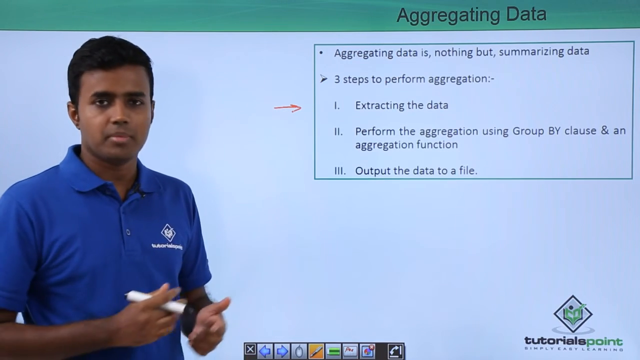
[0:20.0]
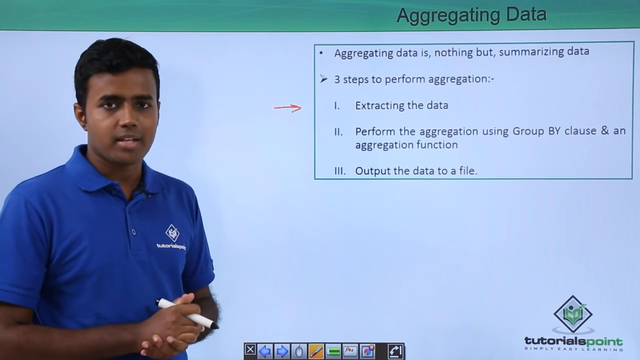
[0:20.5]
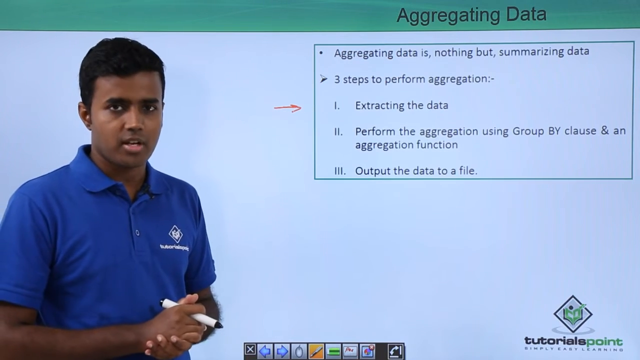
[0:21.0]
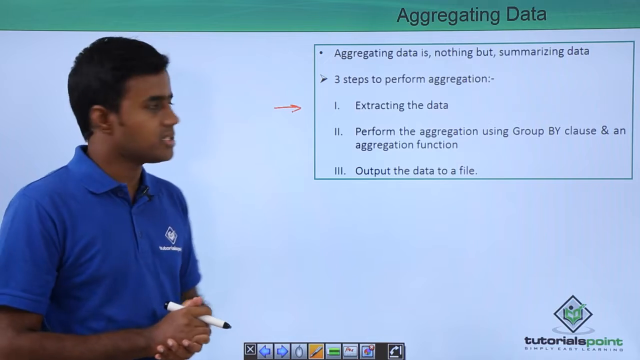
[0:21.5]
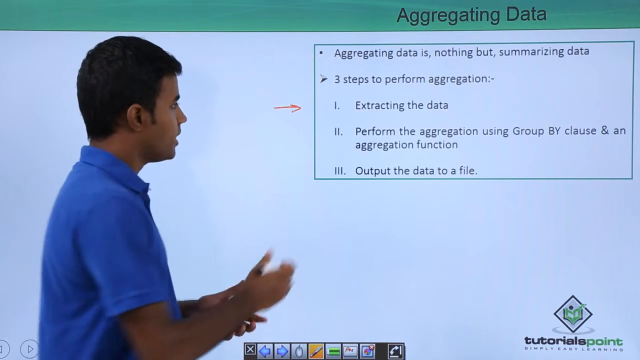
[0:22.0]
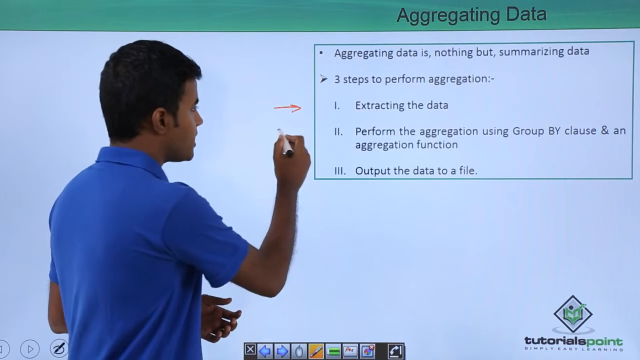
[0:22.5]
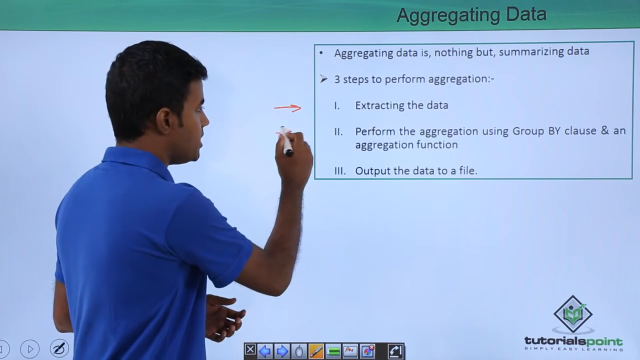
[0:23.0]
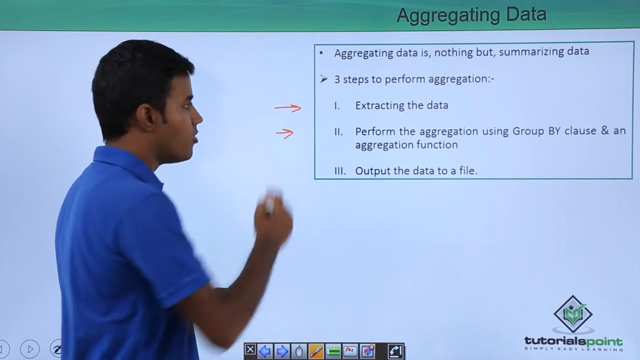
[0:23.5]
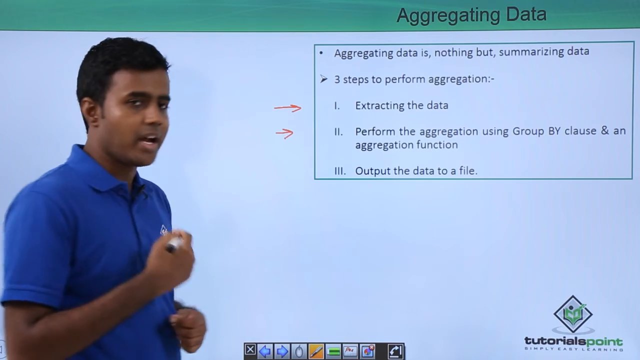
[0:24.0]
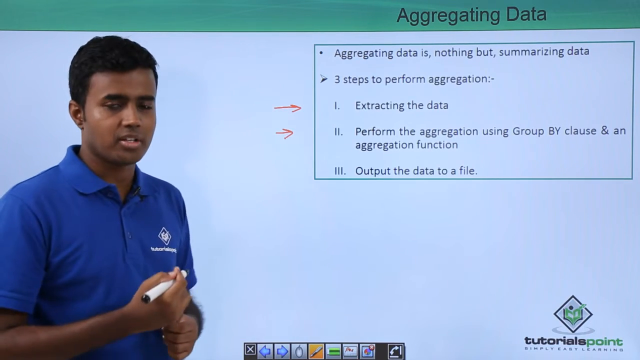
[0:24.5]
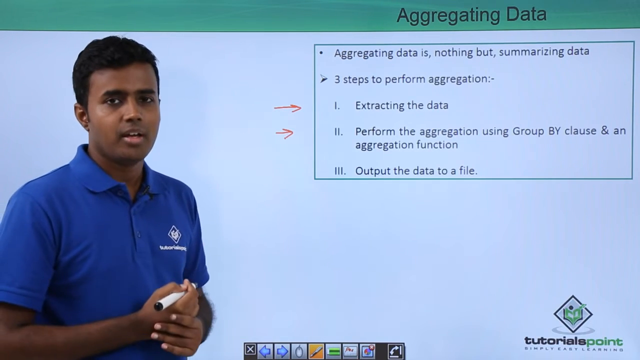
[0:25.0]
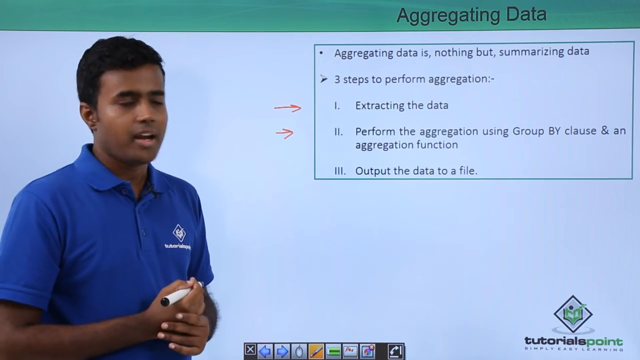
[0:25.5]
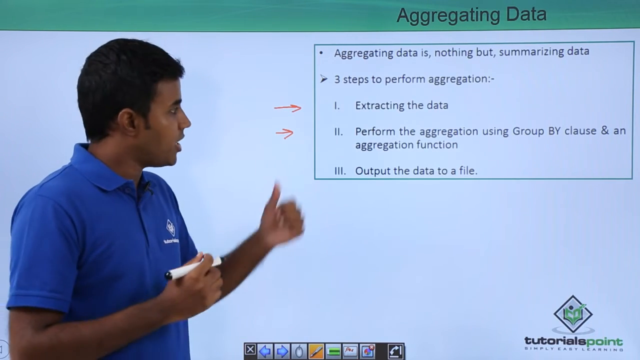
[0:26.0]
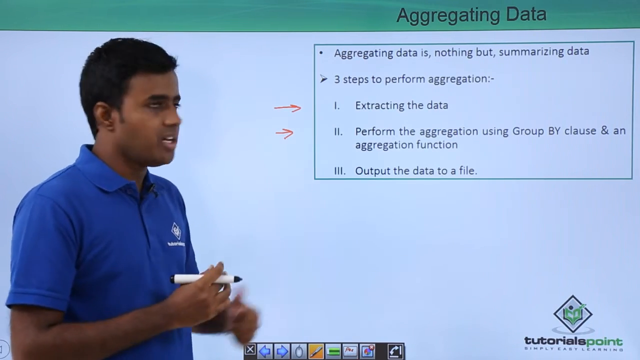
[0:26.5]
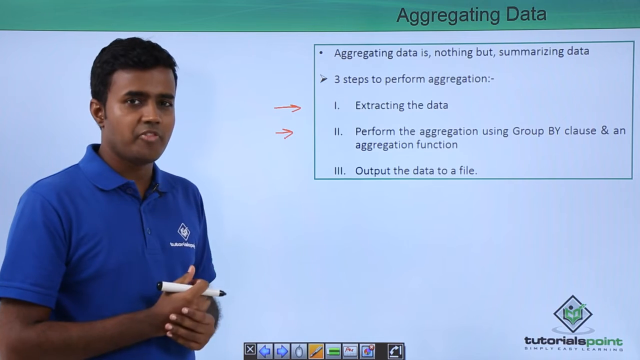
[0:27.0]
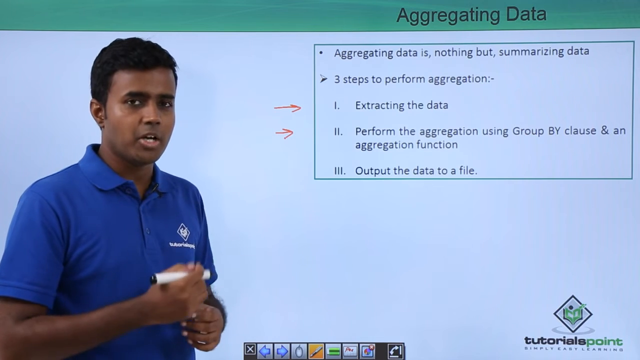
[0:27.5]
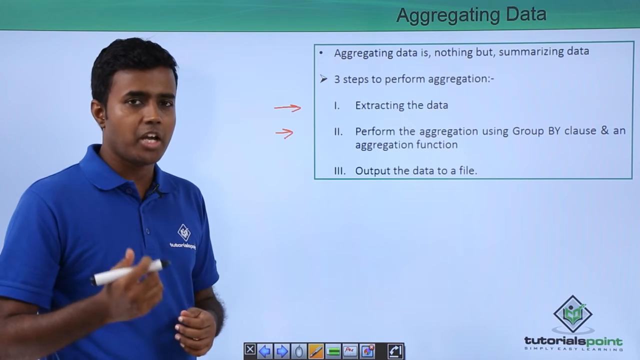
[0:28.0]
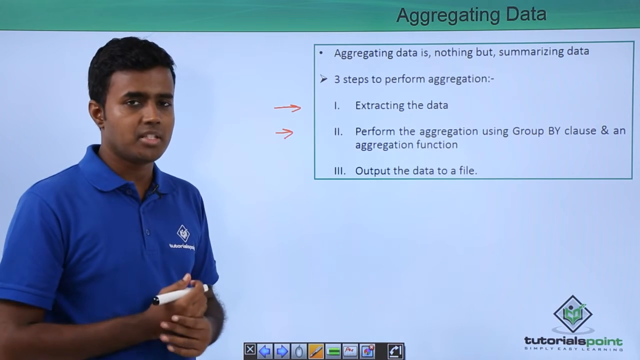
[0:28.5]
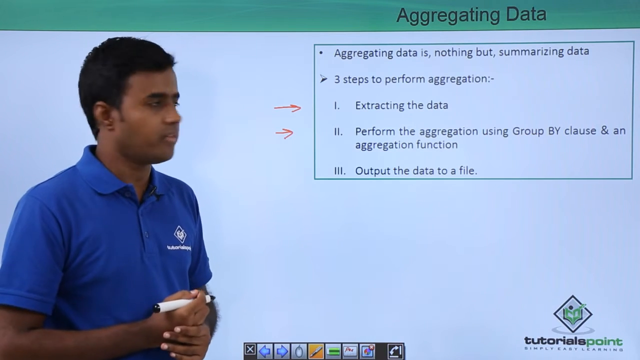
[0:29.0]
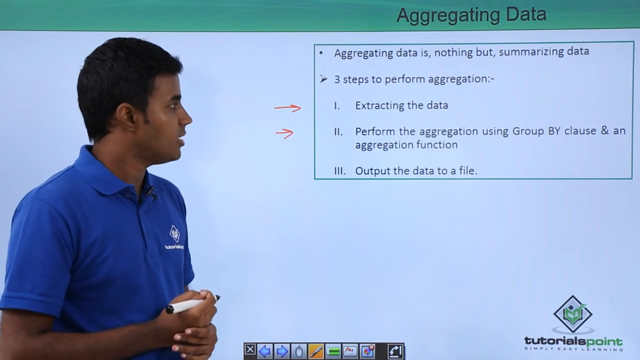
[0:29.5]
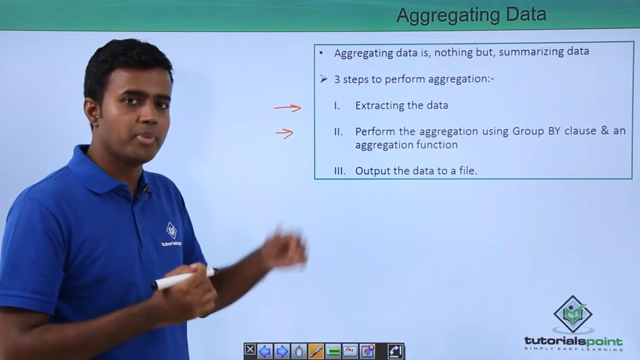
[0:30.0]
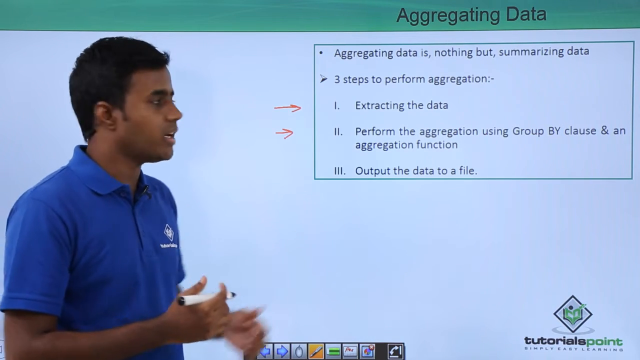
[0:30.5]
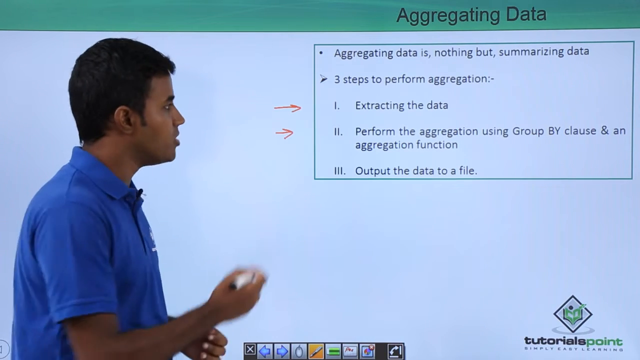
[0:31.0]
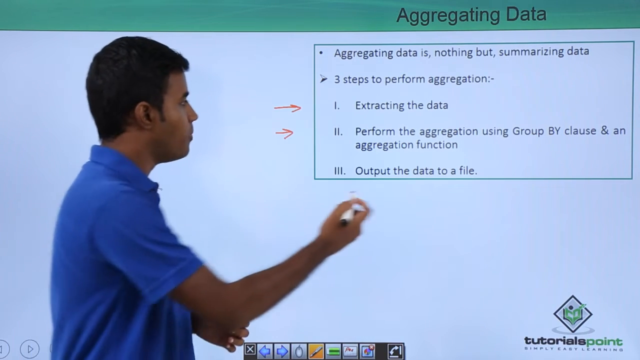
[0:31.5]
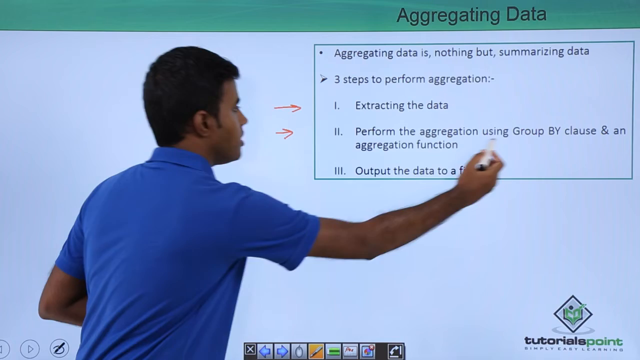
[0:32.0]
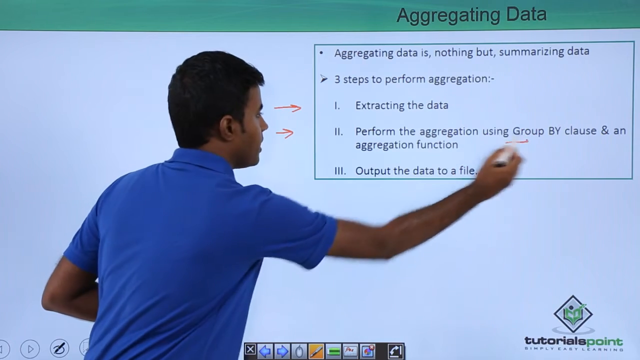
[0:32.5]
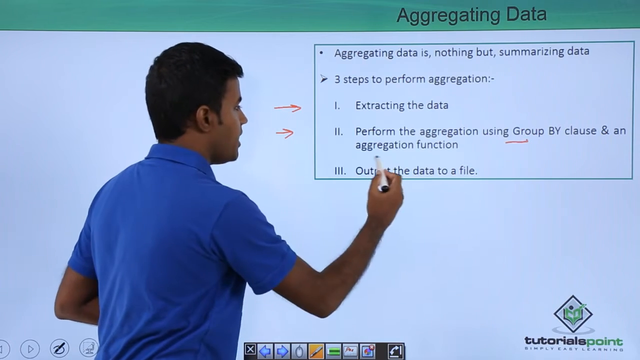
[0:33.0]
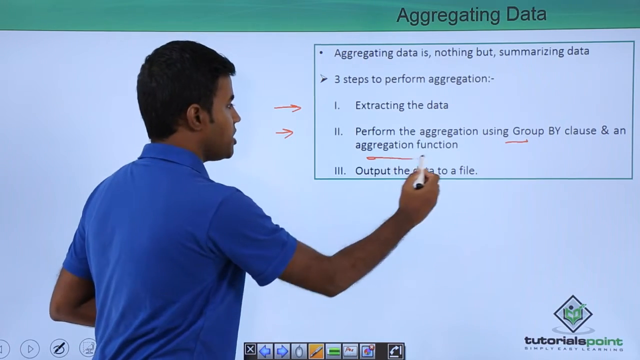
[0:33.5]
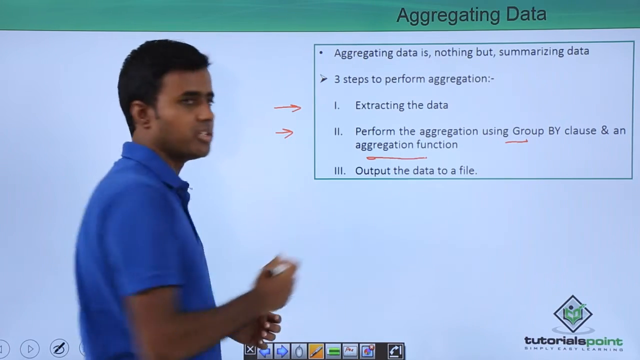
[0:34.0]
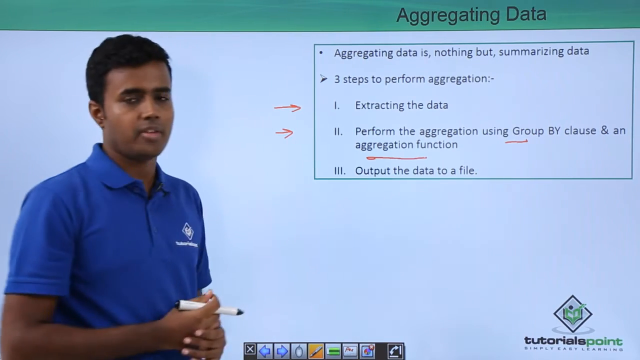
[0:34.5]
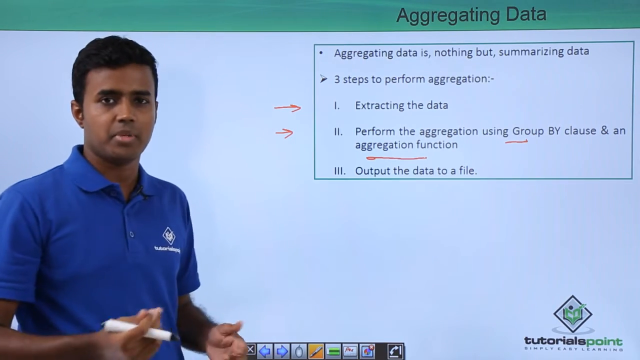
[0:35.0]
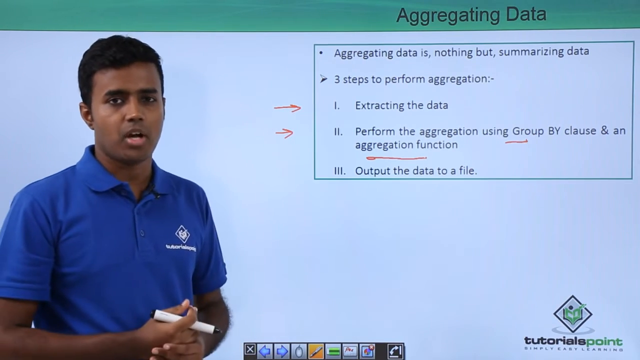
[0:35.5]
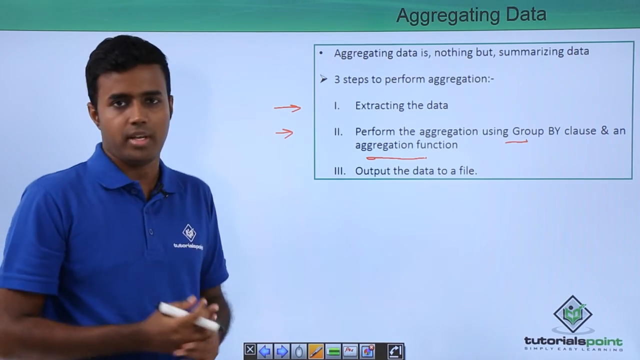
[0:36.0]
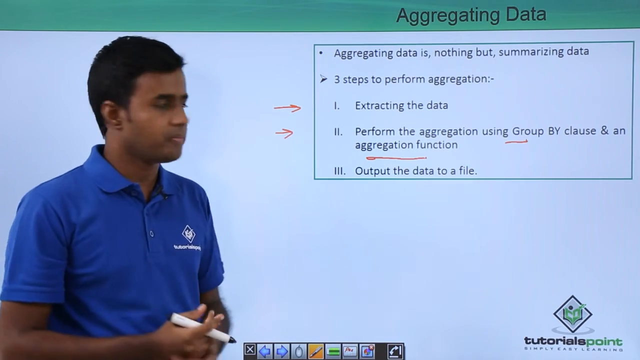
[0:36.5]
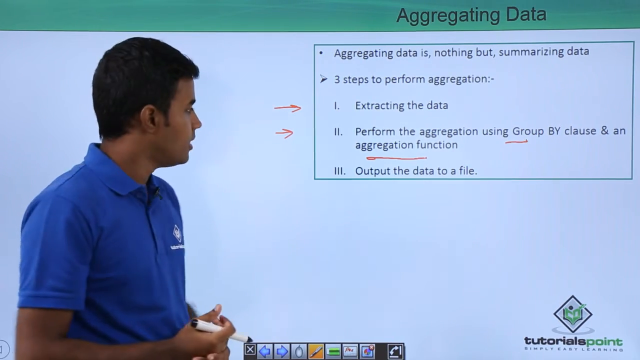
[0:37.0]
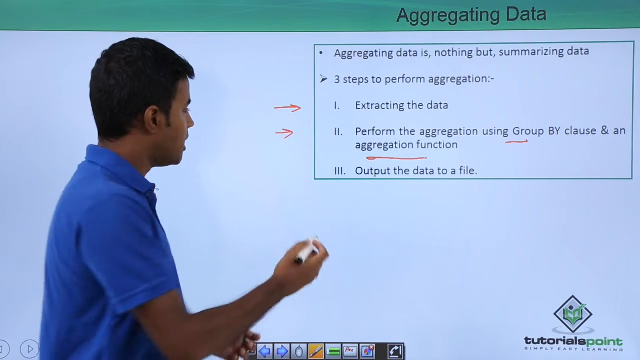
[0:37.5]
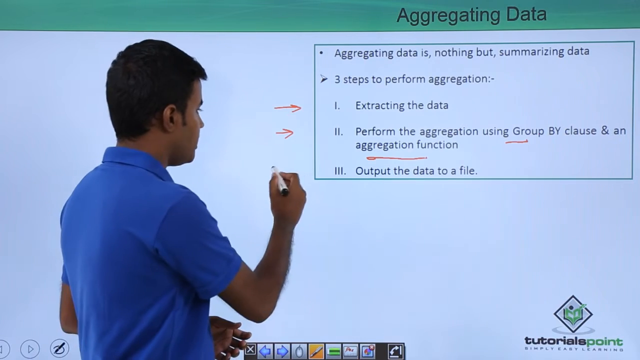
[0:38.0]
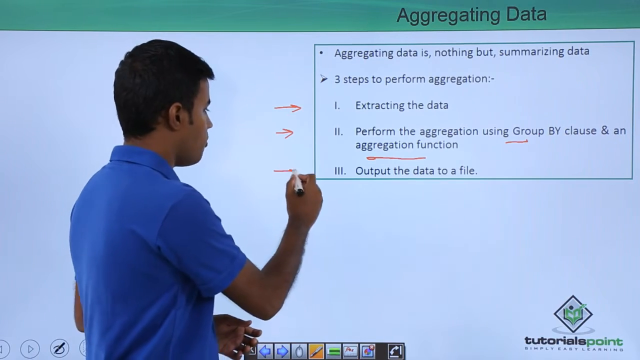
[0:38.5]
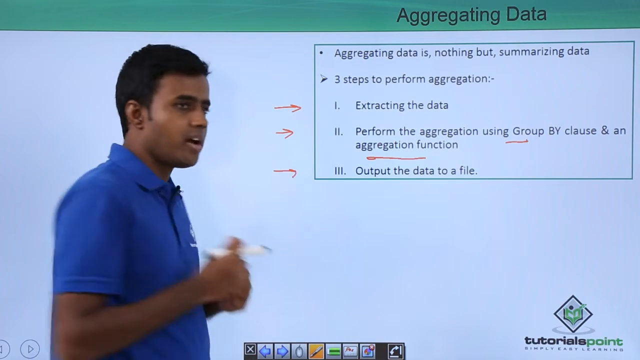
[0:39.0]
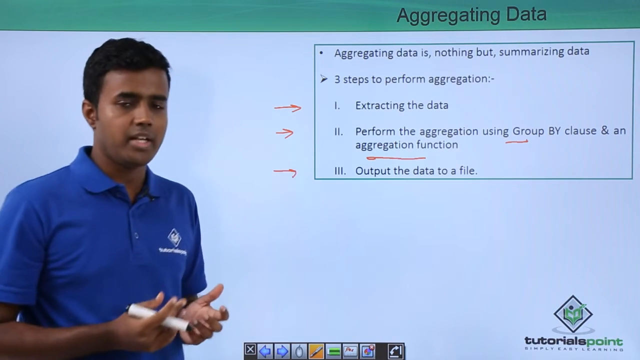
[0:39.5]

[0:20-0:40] The young man, perhaps in his mid-20s, appears to be Indian, with a dark complexion and dark hair, and is fresh-faced, wearing a short-sleeved blue polo shirt. In the upper right corner, beneath a green header reading "aggregating data" in black text, a box contains smaller black text: "aggregating data is nothing but summarizing data. Three steps to perform aggregation." Below are the steps: Roman numeral 1, "extracting the data"; Roman numeral 2, "performing the aggregation using group by clause and aggregation function"; and numeral 3, "output the data to a file." Using the marker in his right hand, the man turns and draws a red arrow pointing to both 1 and 2, and finally underlines the word "aggregation" in step 2, turning frequently toward the audience.